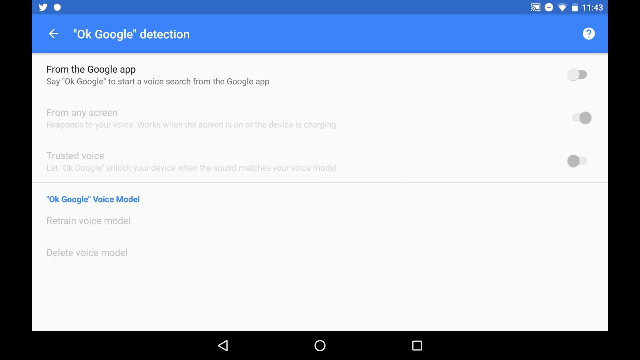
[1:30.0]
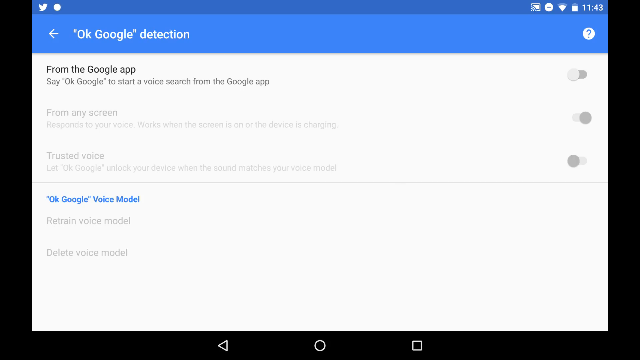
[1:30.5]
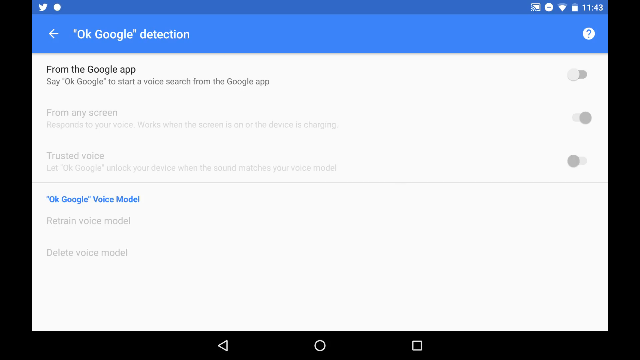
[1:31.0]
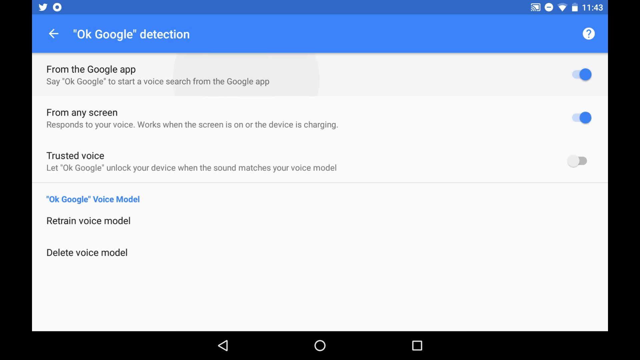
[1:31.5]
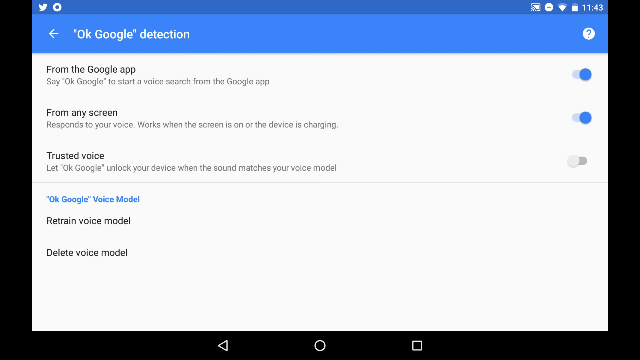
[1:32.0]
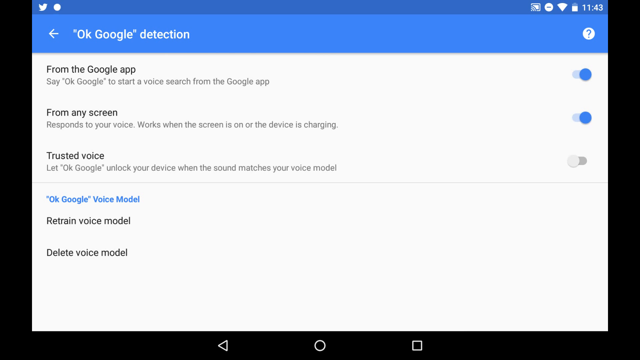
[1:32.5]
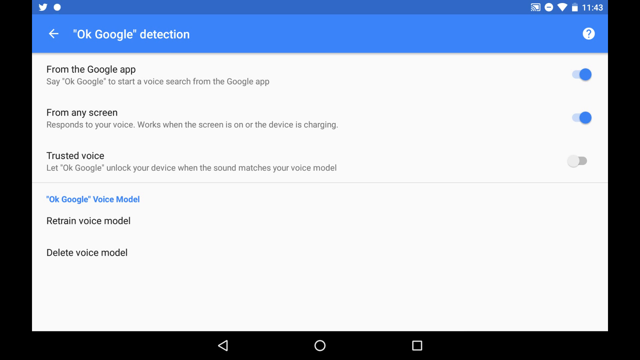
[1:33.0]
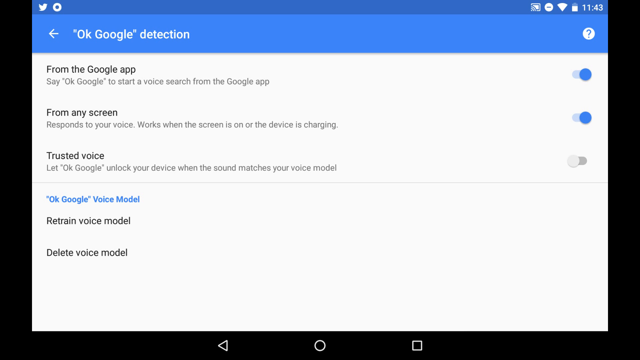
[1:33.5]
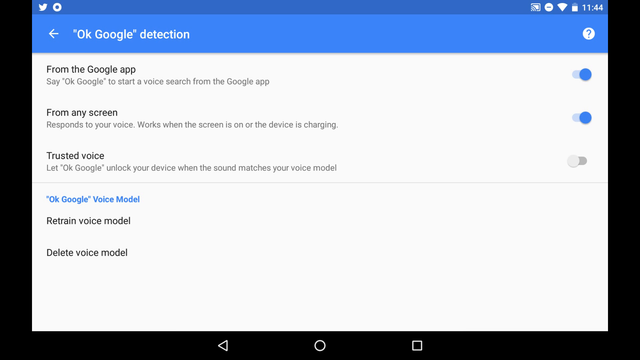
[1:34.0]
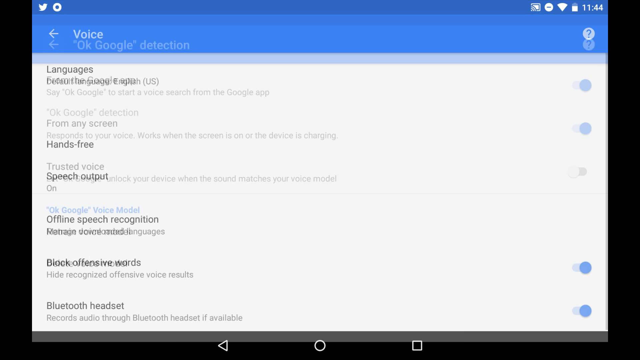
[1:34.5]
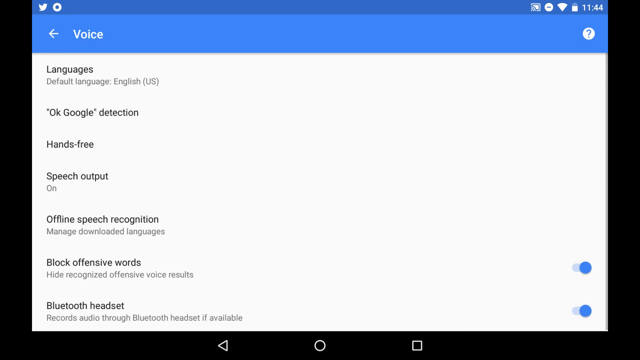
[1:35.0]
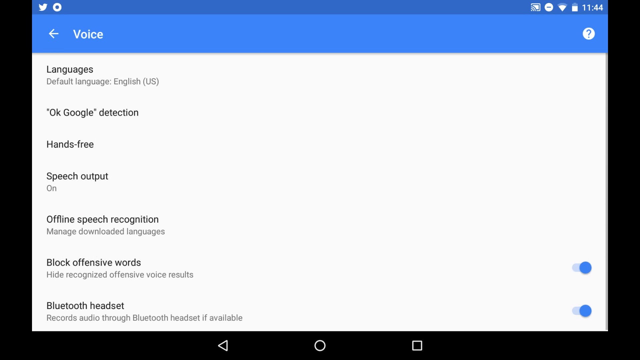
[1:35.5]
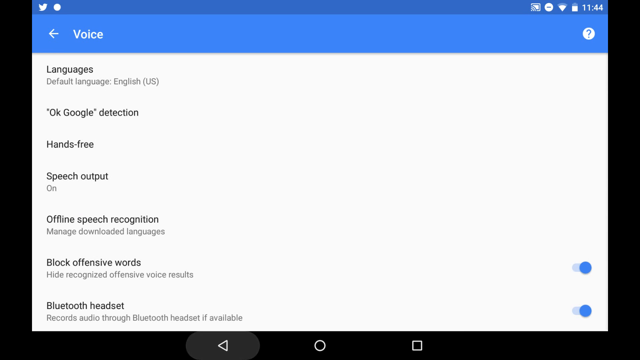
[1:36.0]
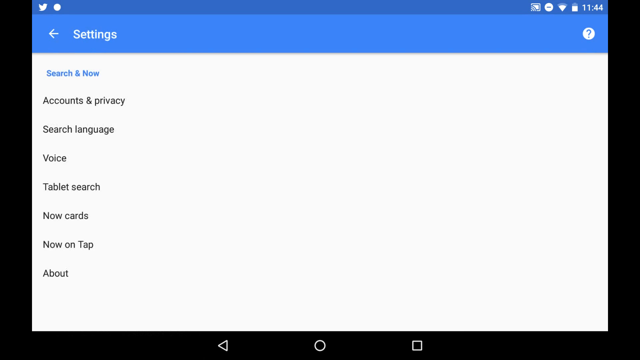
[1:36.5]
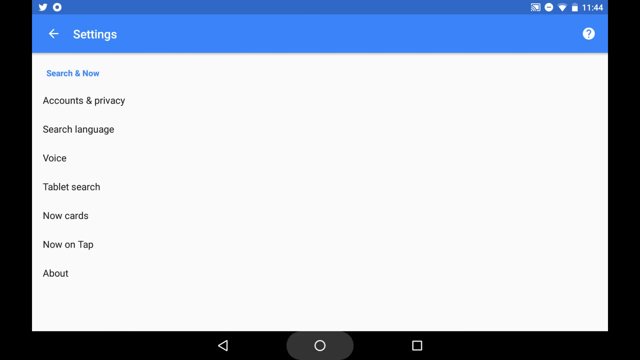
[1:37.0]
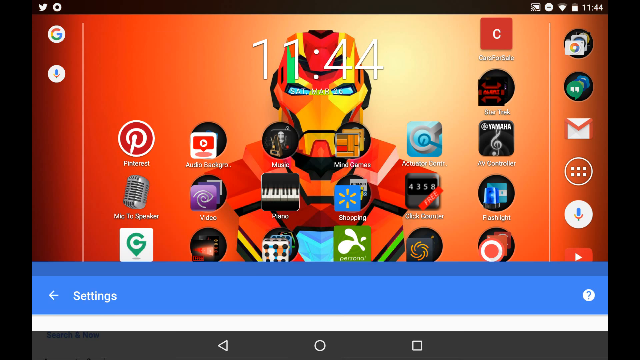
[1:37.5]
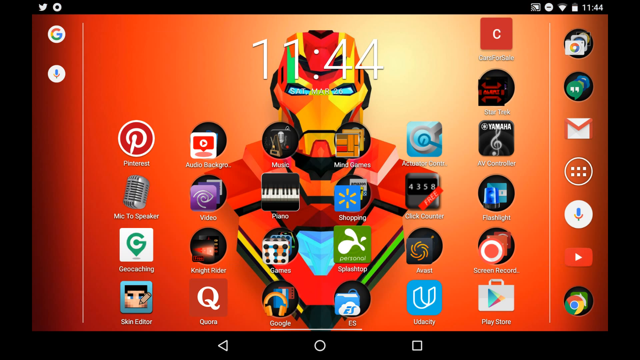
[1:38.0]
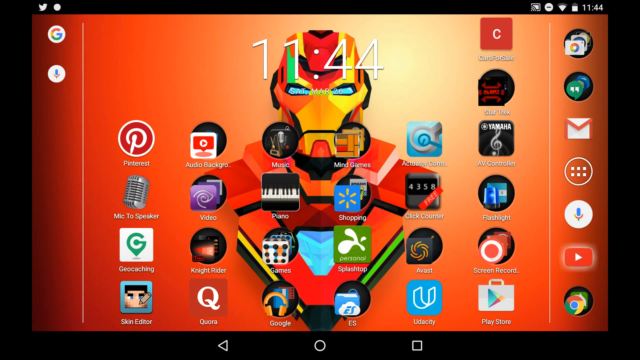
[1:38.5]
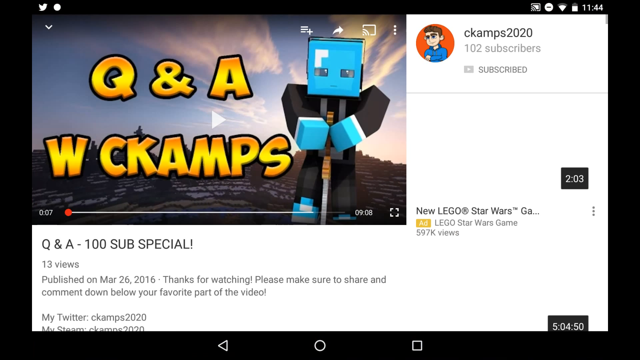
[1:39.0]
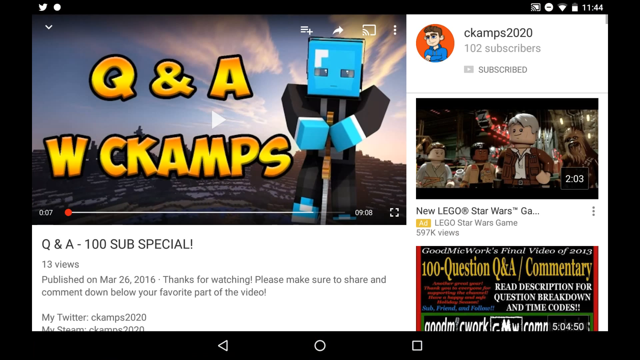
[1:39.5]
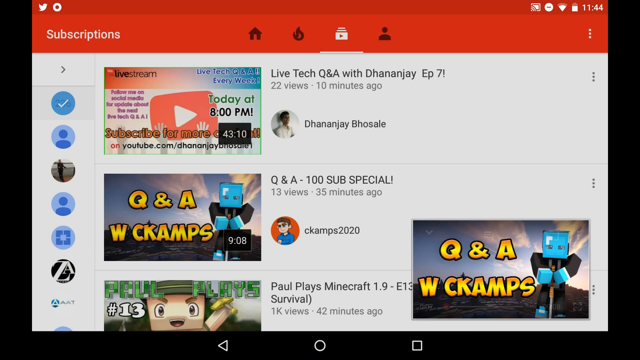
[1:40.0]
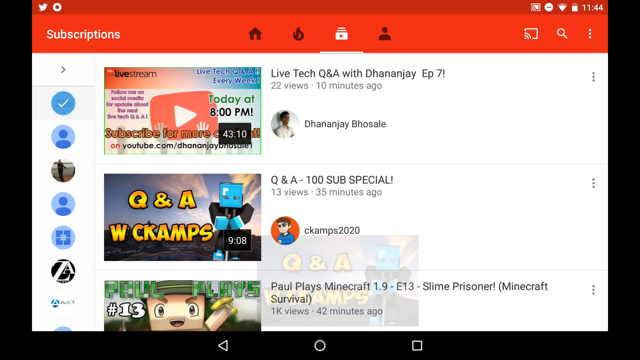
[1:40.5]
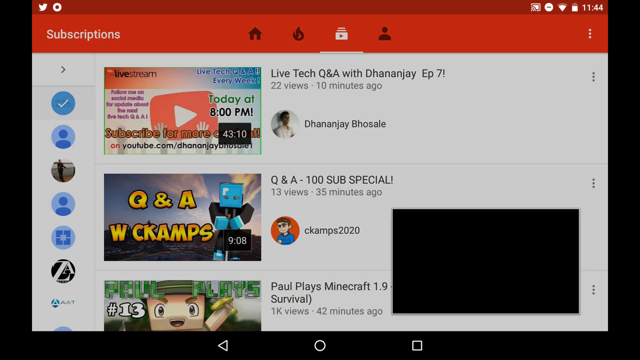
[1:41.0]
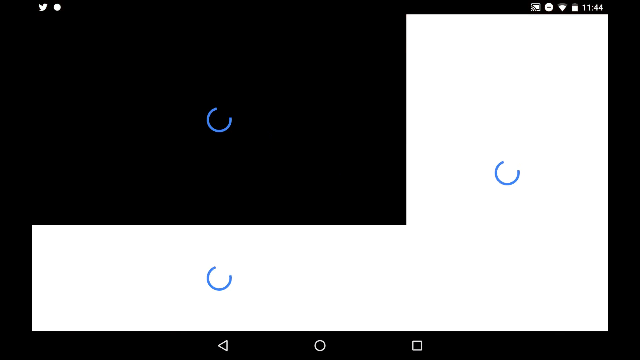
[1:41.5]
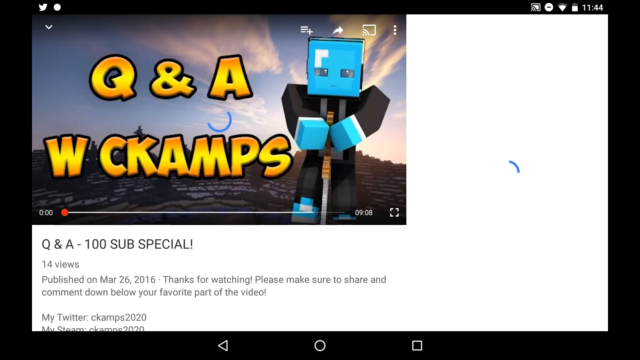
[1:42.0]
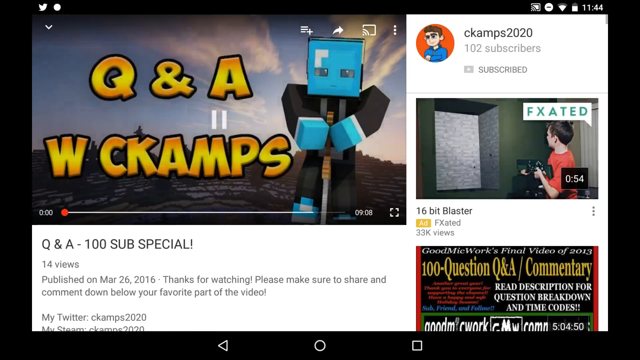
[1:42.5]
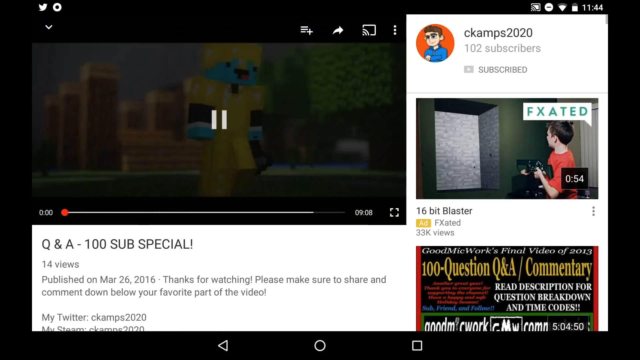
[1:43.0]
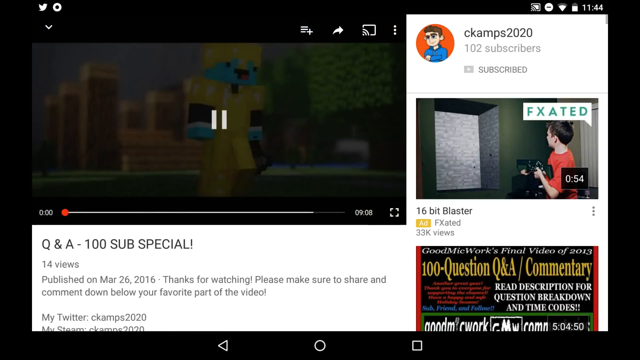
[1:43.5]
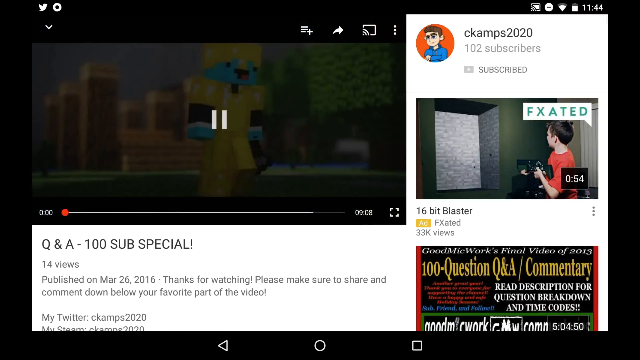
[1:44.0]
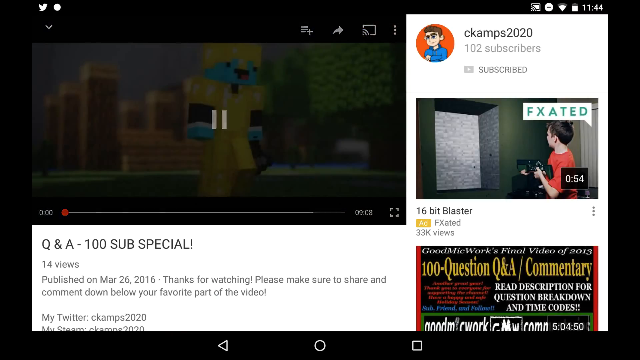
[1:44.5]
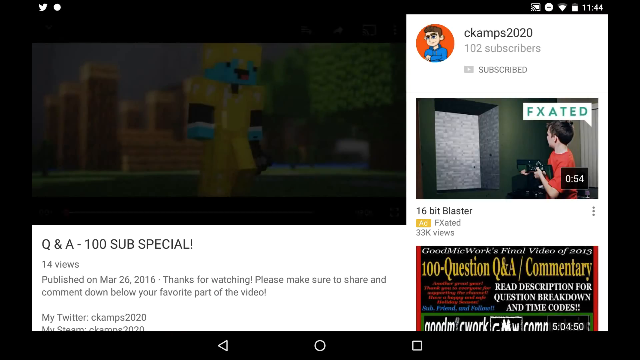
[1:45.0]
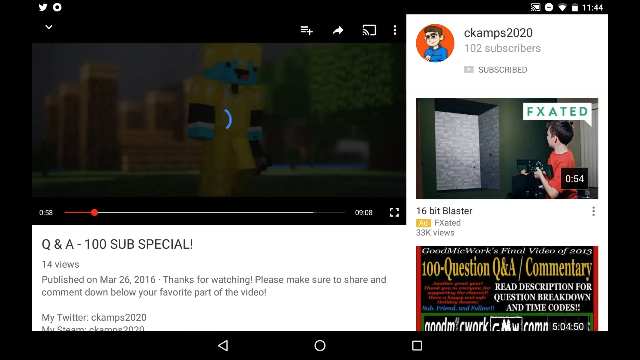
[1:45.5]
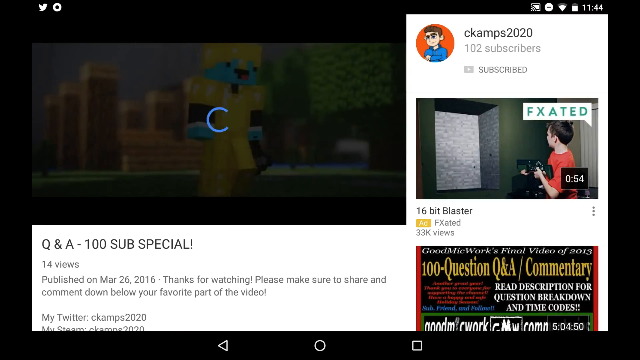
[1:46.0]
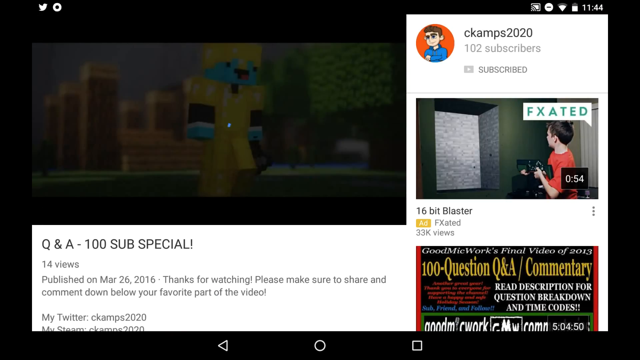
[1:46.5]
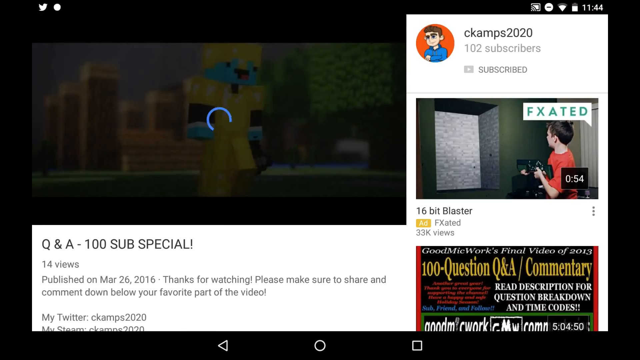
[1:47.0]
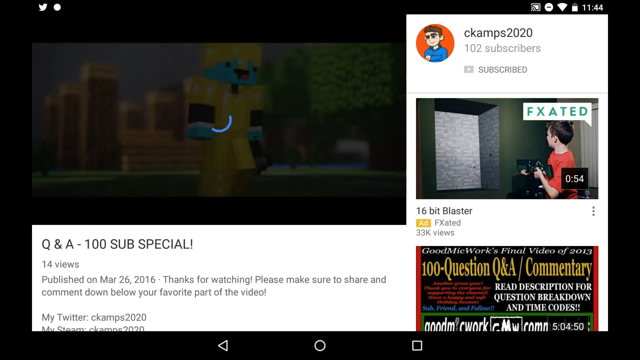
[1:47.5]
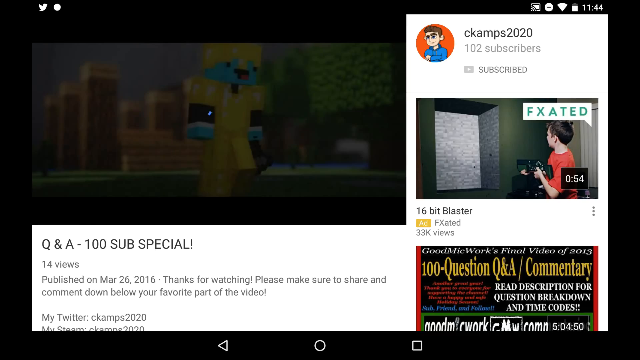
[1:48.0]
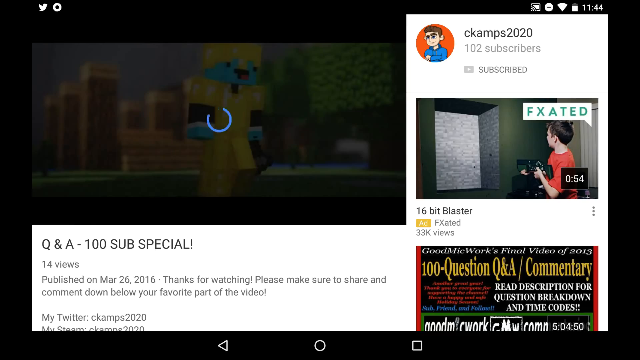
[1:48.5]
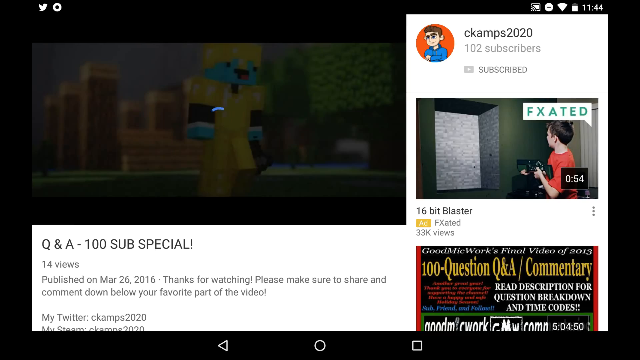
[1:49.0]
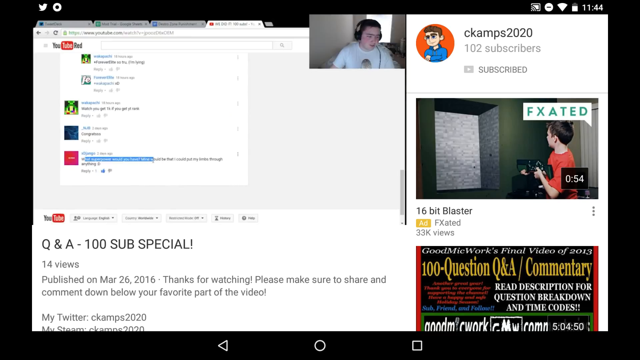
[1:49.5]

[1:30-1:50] A screen says "Okay Google detection", with text reading "from the Google app, say okay Google to start a voice search from the Google app", "from any screen", "response to your voice", "voice works when the screen is on or the device is charging", and "trusted voice, let okay Google unlock your device when the sound matches your voice model", plus "Okay Google voice model", "retrain voice model" and "delete voice". All of these are disabled, and then the user enables from the Google app and from any screen. The user goes back to the voice section, which lists languages, default language English US, Okay Google detection, hands-free, speech output on, offline speech recognition, manage downloaded languages, block offensive words, hide recognized offensive voice results, and Bluetooth headset audio through Bluetooth headset if available; a small question mark help button is in the top right corner. The user goes to settings, showing search and now, accounts and privacy, search language, voice, tablet search, now cards, now on tap, and about, and then returns to the tablet home screen with a red Iron Man background. Its icons or apps include Pinterest, Geocaching, Mic to Speaker, Skin Editor, audio, background, video, Knight Rider, forum, music, piano, games, Google, Mind Games, shopping, Splashtop, ES, click counter, Avast, Udacity, Cars for Sale, Star Trek, AV Controller, flashlight, screen recorder, and Play Store, with Messages, email, microphone, YouTube, and Google Chrome on the right. The user opens a YouTube video titled "Q and A 100 subs special" with 13 views, published on March 26, 2016, with the text "thanks for watching please make sure to share and comment down below your favorite part of the video my twitter ccamps 2020 and my steam ccamps 2020". The channel ccamps 2020 has 102 subscribers and the user is subscribed, and below are videos such as an ad for a new Lego Star Wars game and another video titled "100 question Q and A commentary". The user closes out of it and is on their YouTube subscriptions page, with channels they are subscribed to on the left and videos such as "live tech Q and A with D Han J episode 7", "Q and A 100 sub special", and "Paul plays Minecraft 1.9 episode 13 slime prisoner Minecraft survival". The user goes to the "Q and A 100 subs special" video as if to play it, but only the character in the game, in yellow and blue, is visible. The user skips ahead, and the video shows a boy on webcam, on YouTube Red, with some comments.